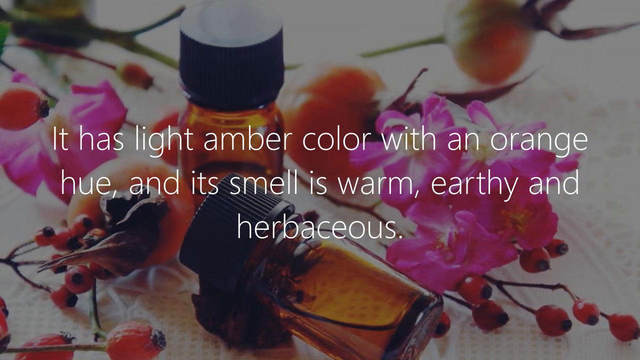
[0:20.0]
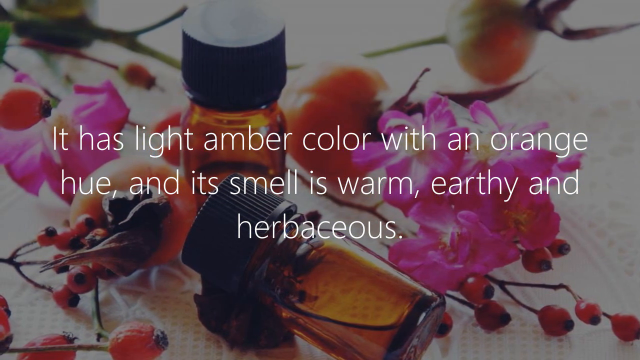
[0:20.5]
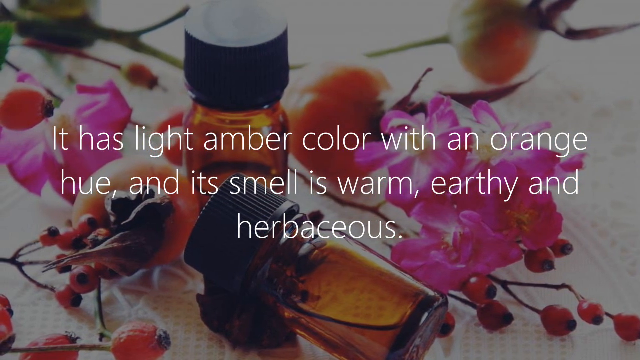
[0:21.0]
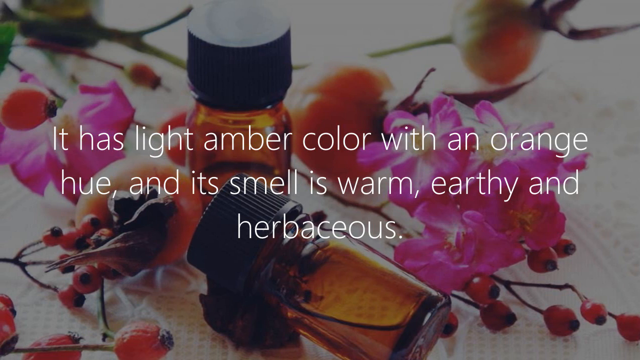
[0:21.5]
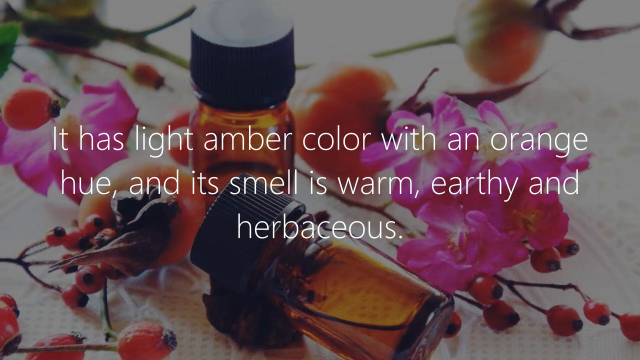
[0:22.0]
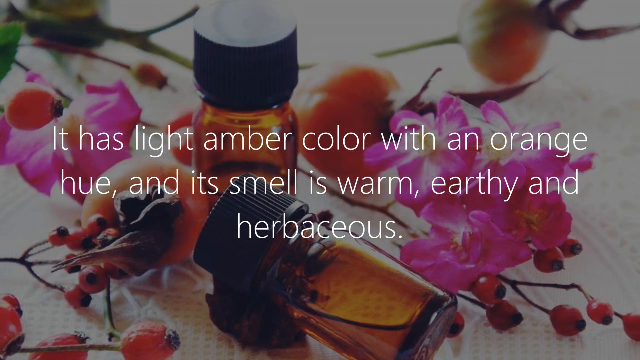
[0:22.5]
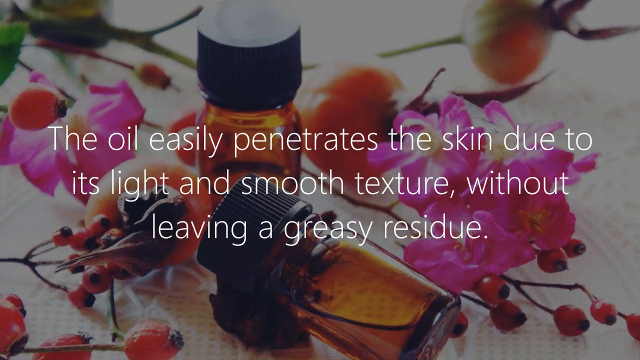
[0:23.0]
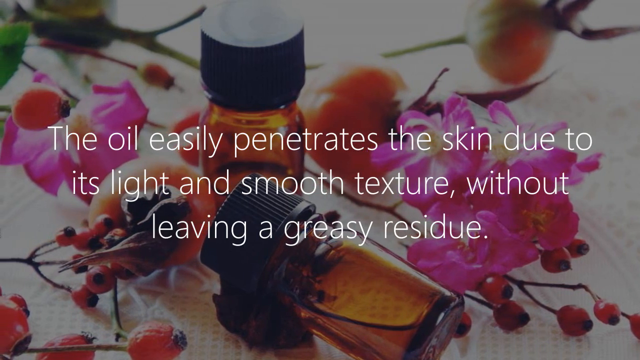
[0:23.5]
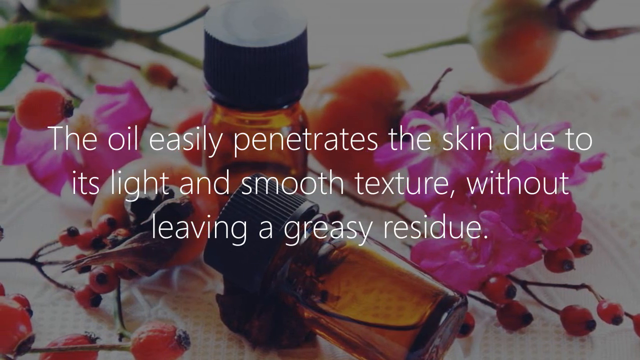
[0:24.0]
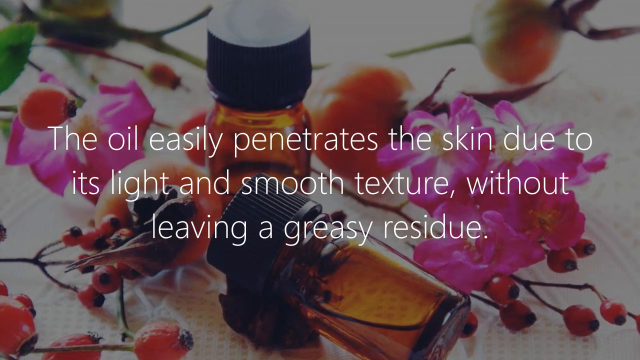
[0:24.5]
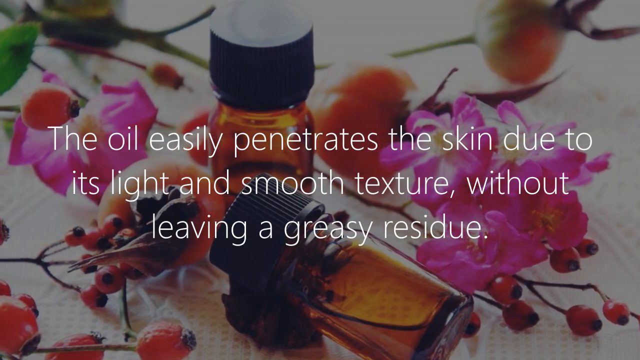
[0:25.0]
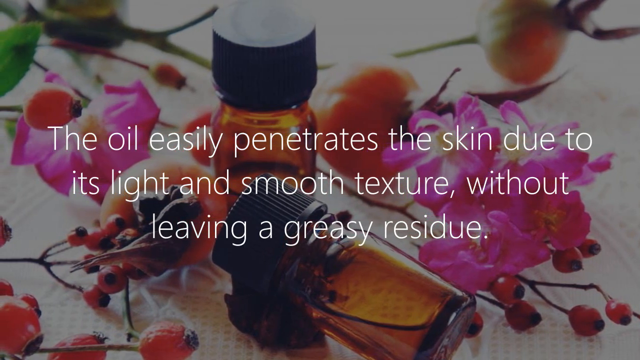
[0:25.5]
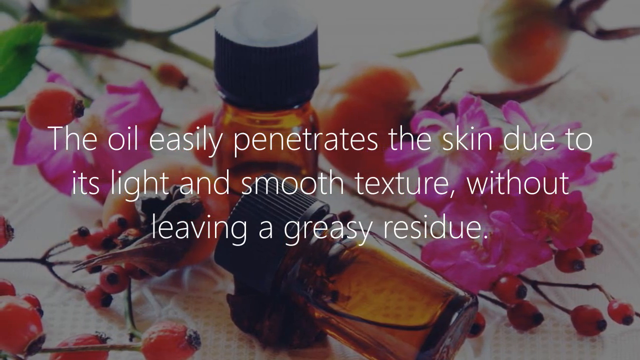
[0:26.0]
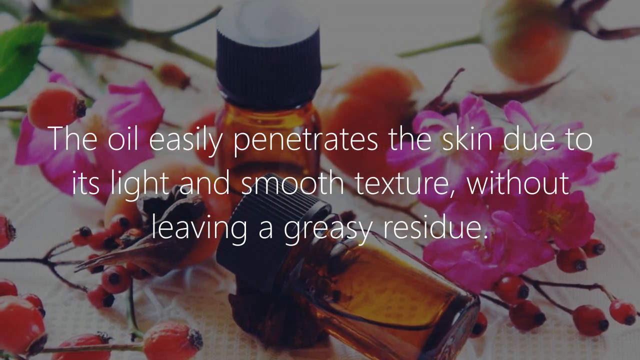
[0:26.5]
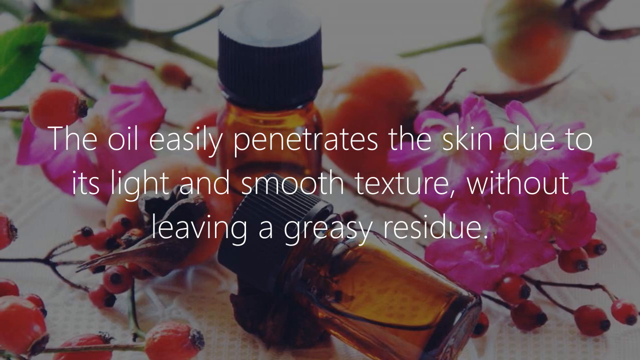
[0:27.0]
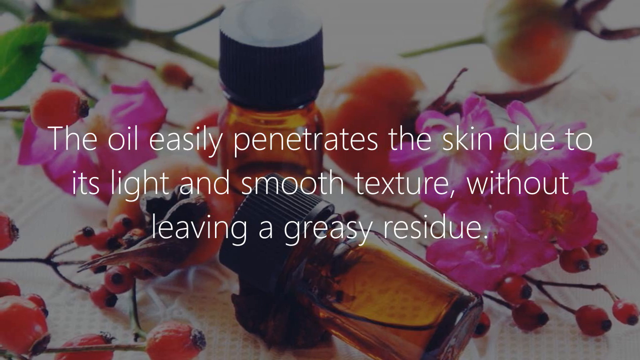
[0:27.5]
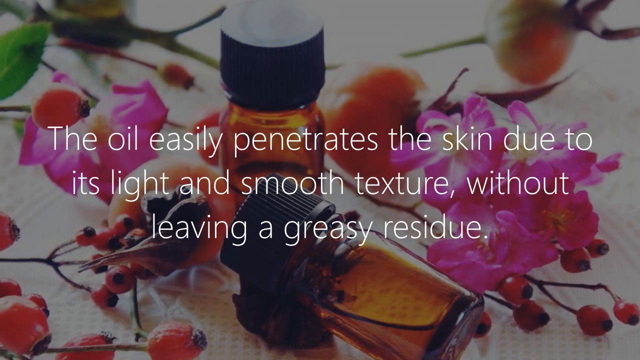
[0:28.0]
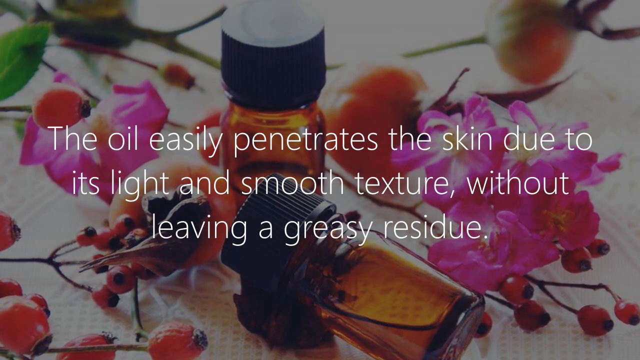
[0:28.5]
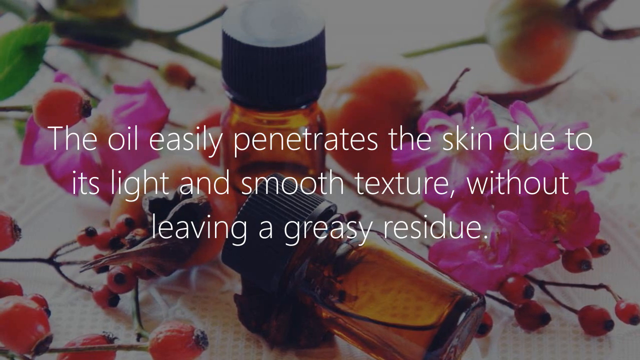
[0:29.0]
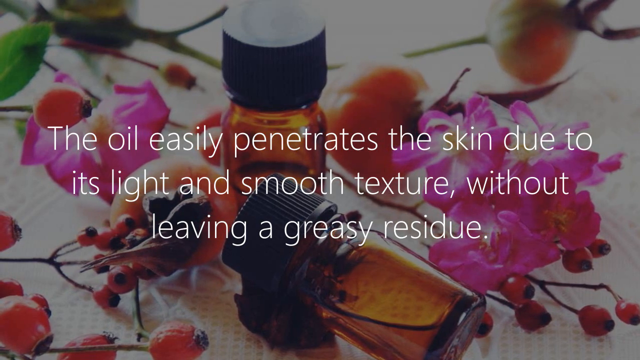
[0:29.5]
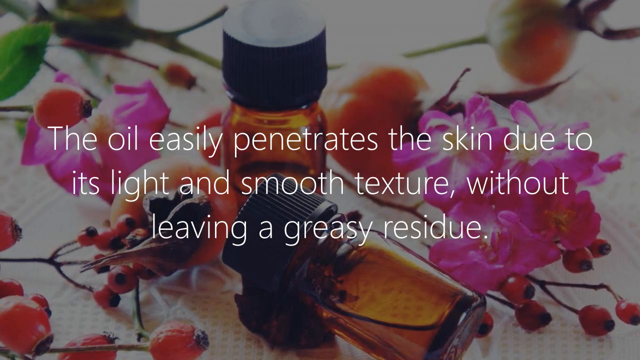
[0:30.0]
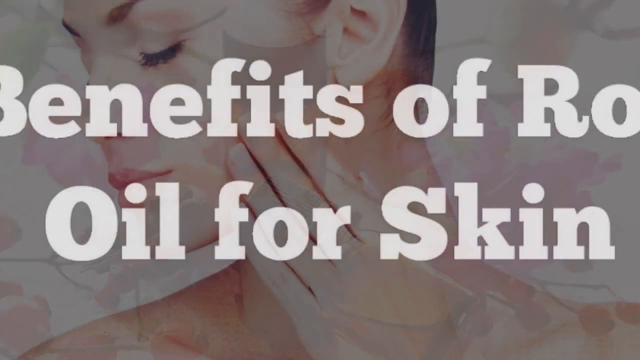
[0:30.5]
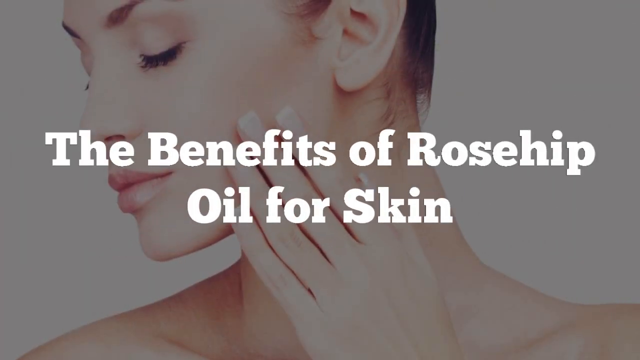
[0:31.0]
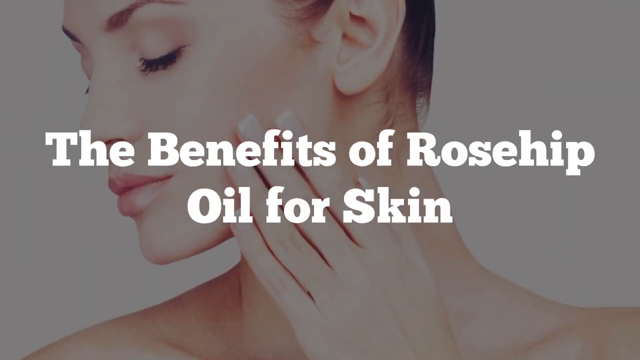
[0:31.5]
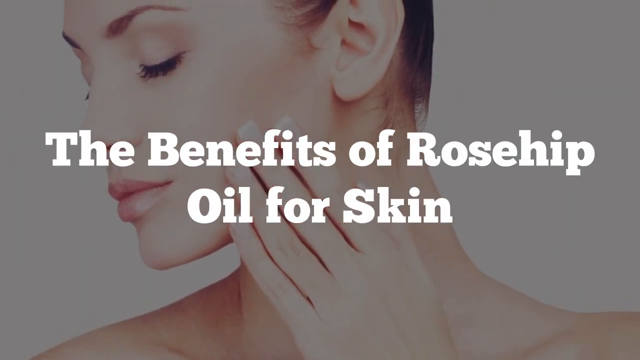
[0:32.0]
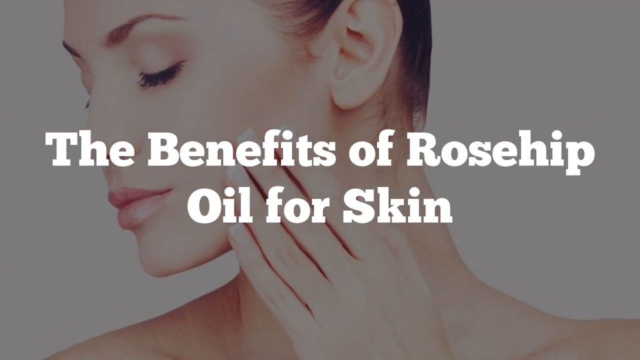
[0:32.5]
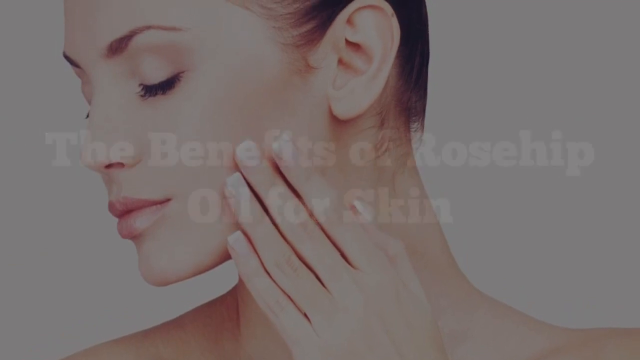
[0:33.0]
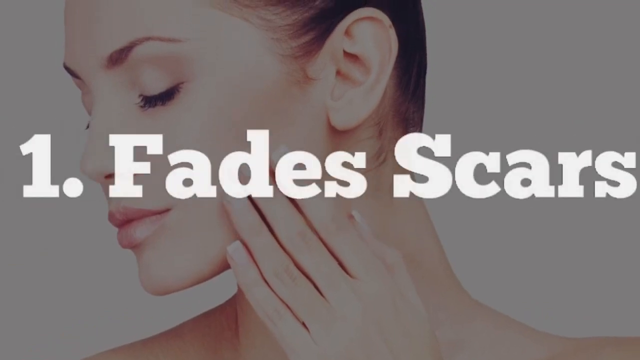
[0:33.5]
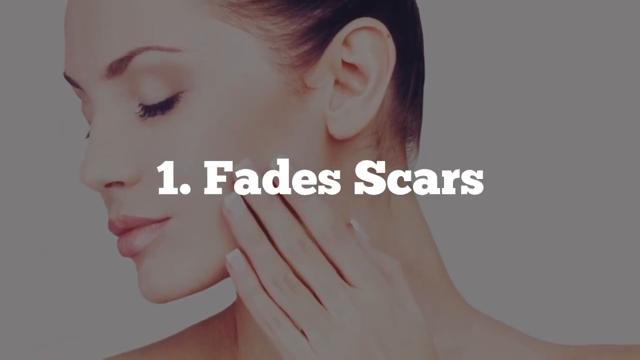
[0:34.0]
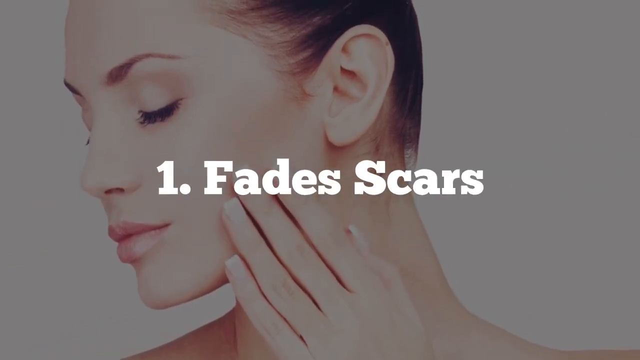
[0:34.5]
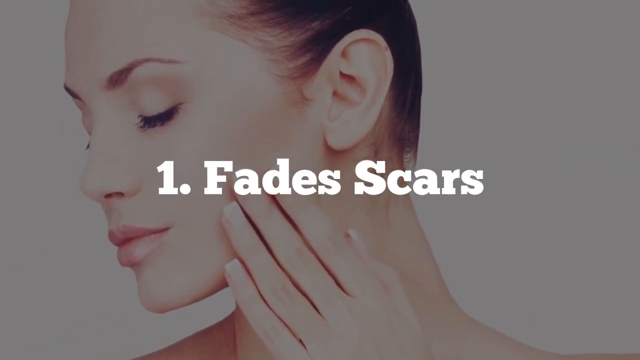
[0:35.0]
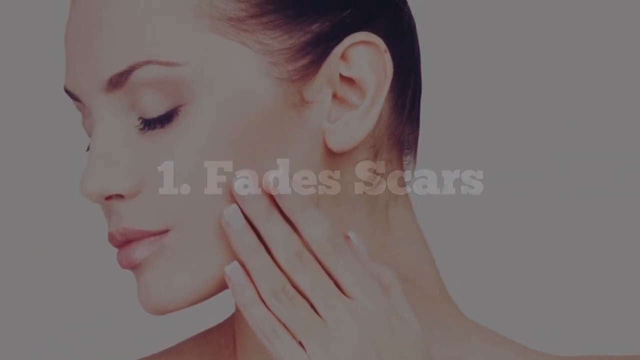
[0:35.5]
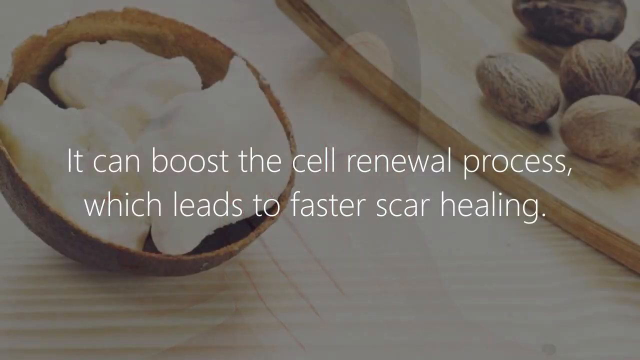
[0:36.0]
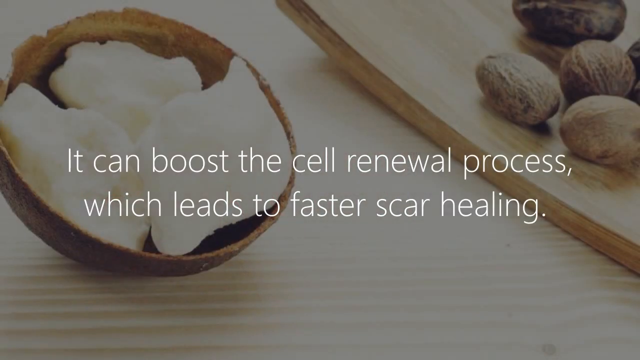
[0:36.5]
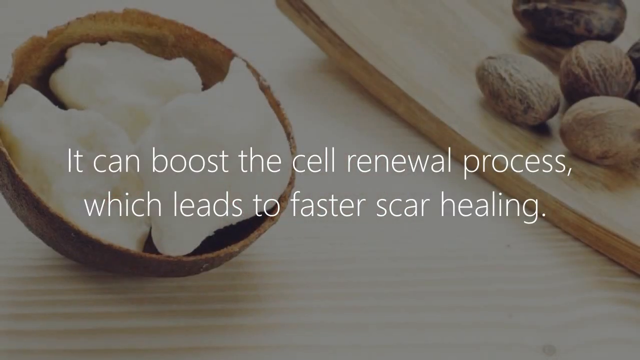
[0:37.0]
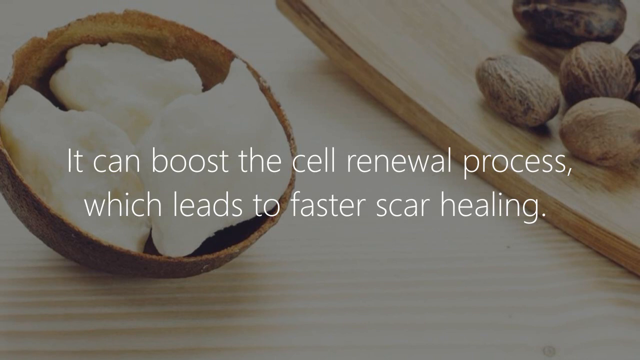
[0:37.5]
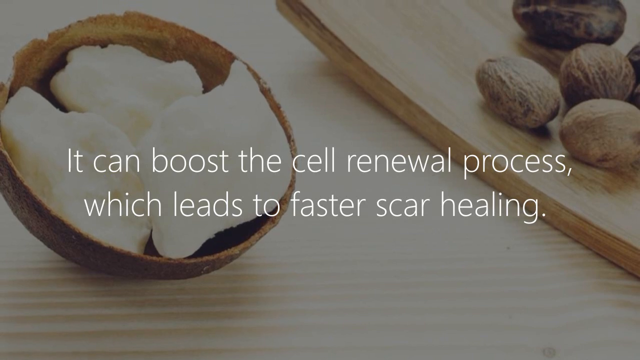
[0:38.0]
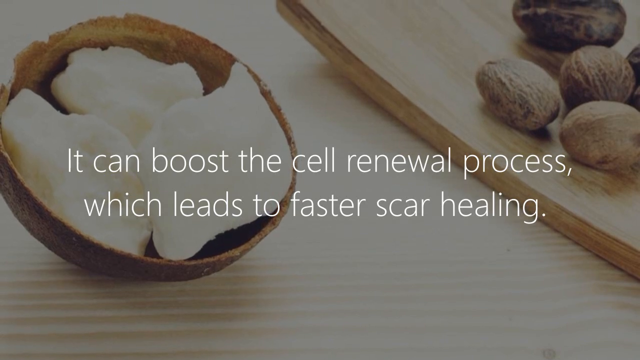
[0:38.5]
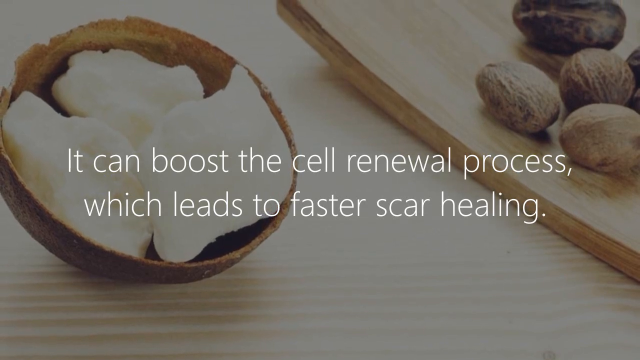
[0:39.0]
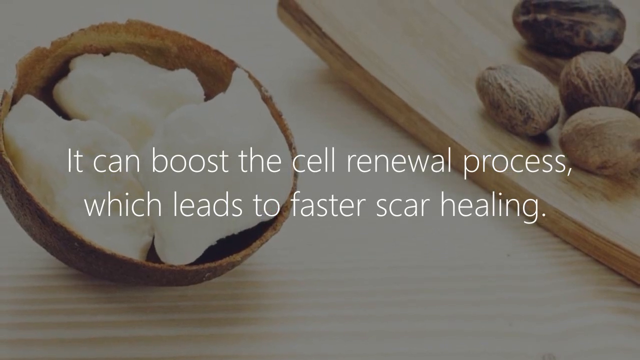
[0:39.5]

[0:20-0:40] The first benefit of rosehip oil for skin is presented: it fades scars, boosting the cell renewal process for faster scar healing, and it can be mixed with shea butter and rubbed onto scars. In the background is what looks like an example of shea butter.